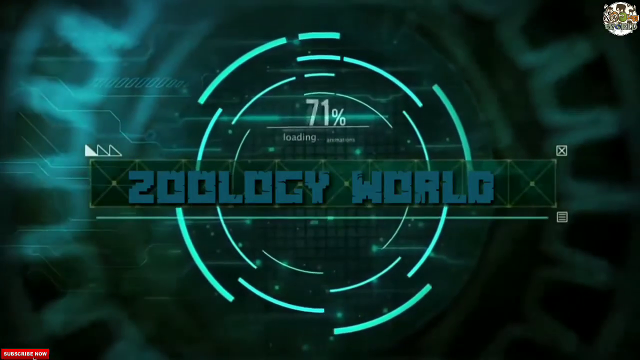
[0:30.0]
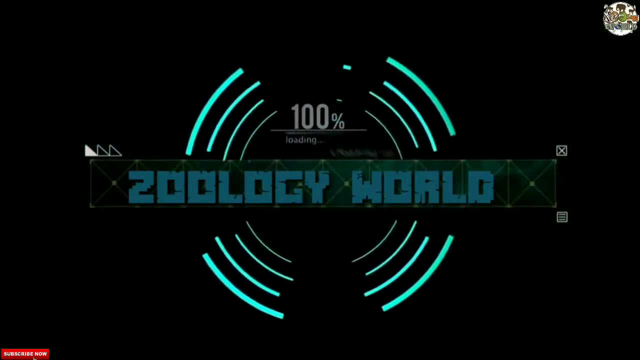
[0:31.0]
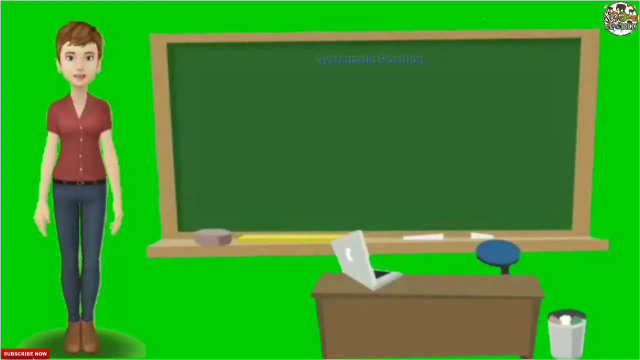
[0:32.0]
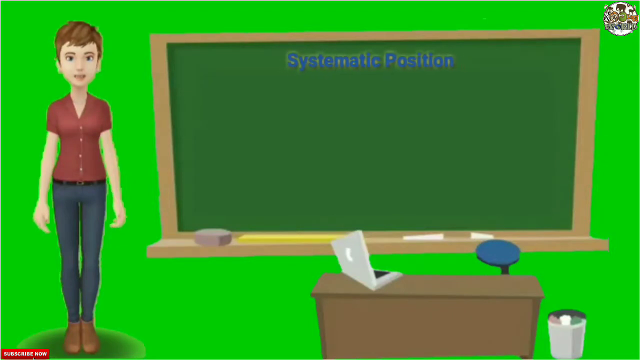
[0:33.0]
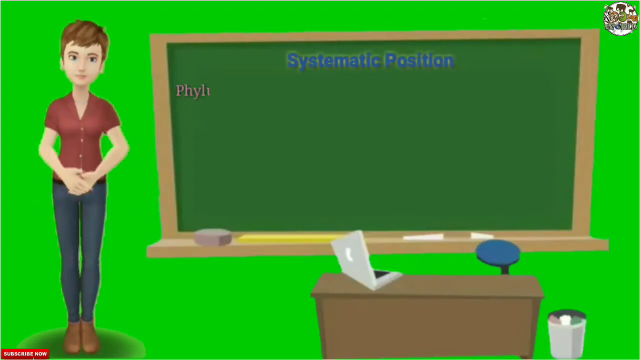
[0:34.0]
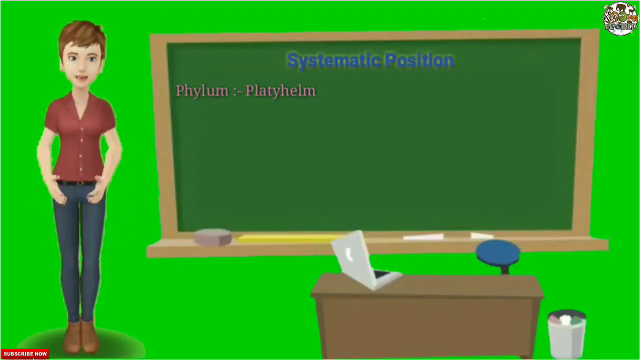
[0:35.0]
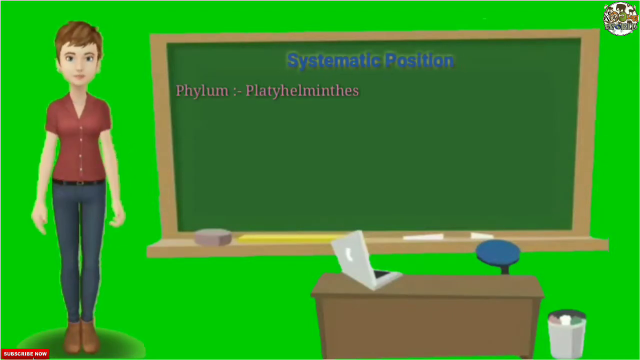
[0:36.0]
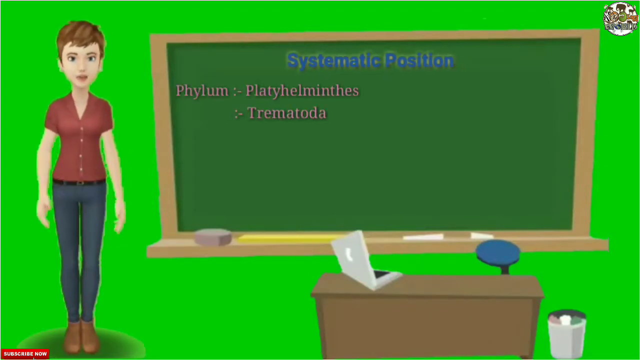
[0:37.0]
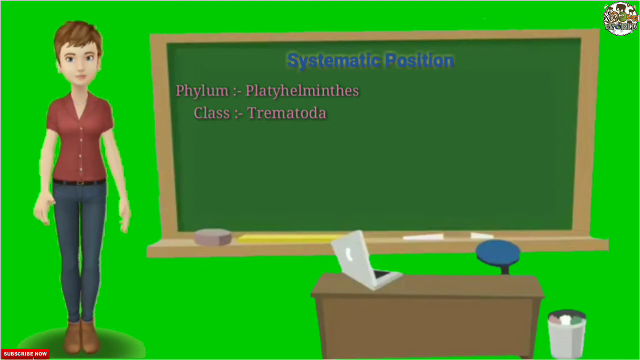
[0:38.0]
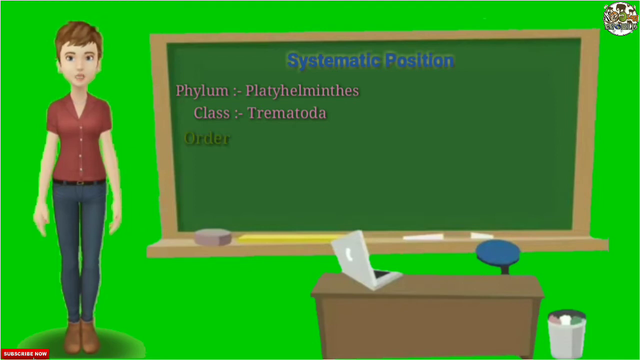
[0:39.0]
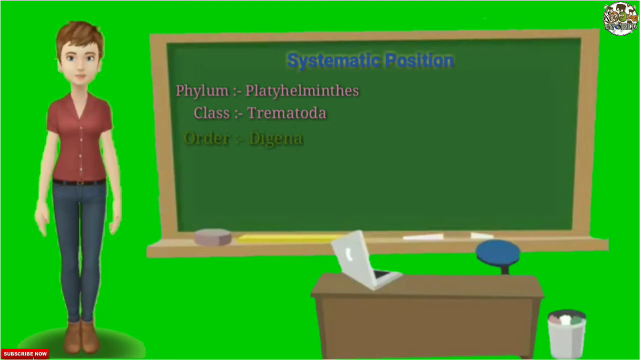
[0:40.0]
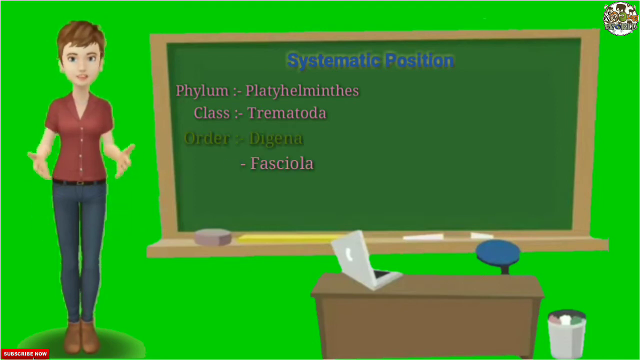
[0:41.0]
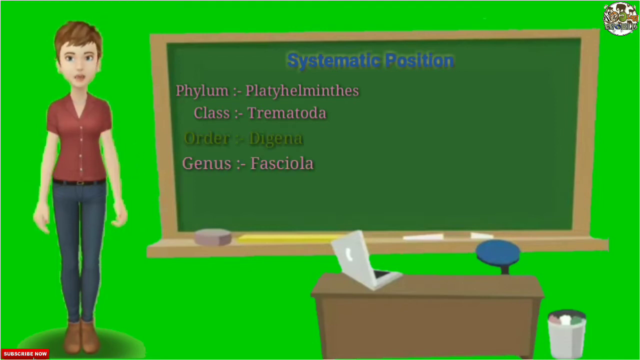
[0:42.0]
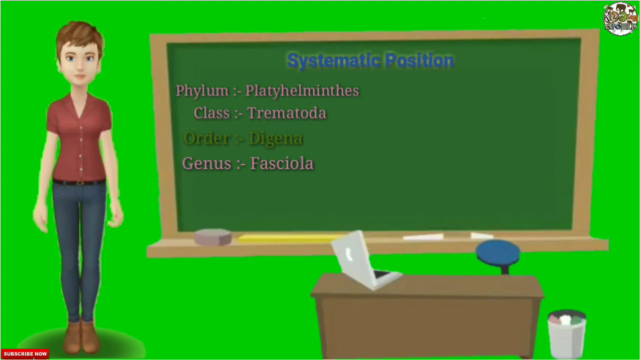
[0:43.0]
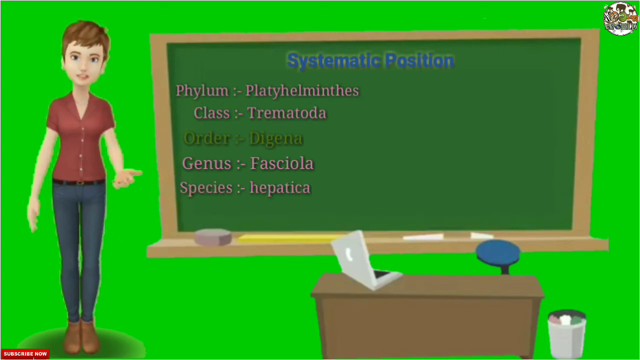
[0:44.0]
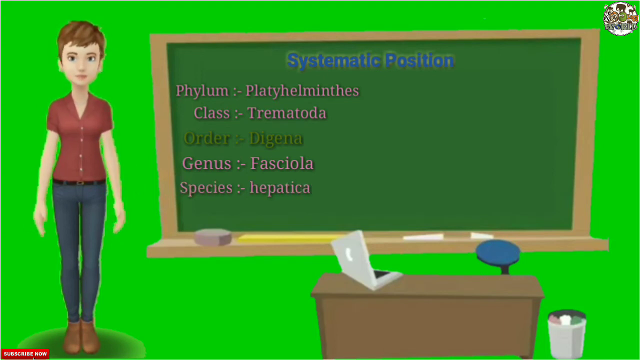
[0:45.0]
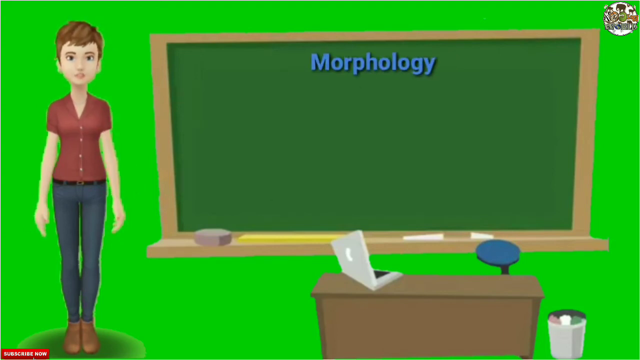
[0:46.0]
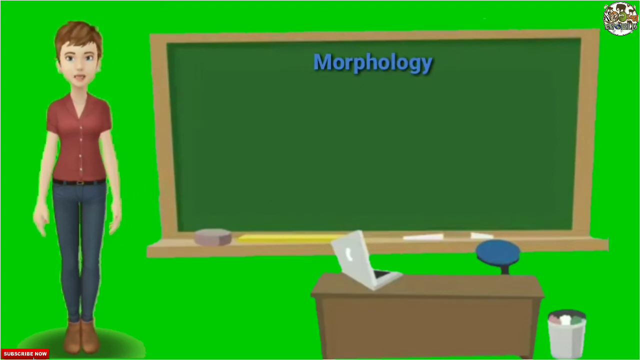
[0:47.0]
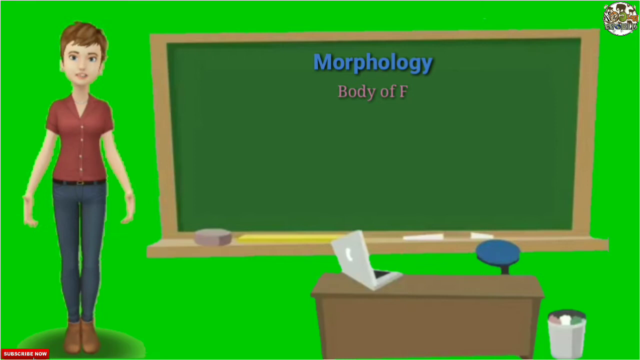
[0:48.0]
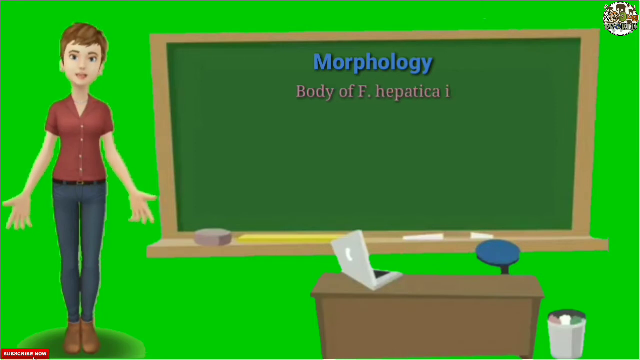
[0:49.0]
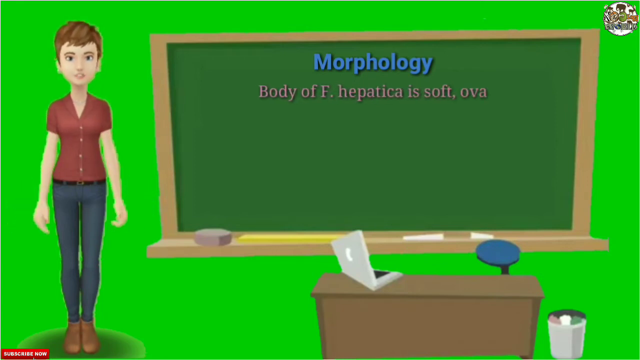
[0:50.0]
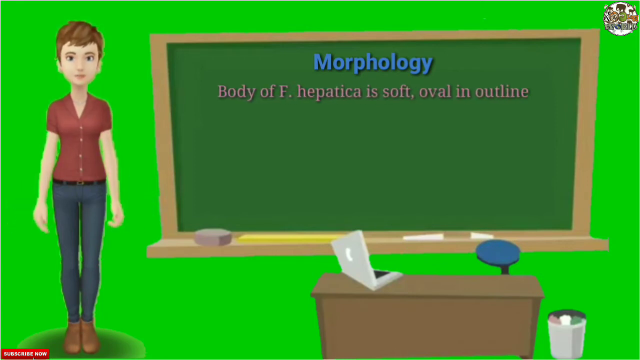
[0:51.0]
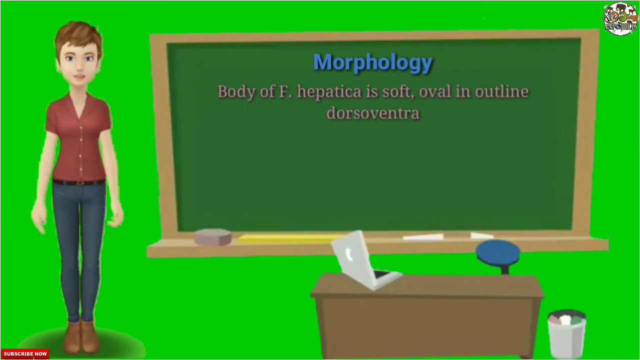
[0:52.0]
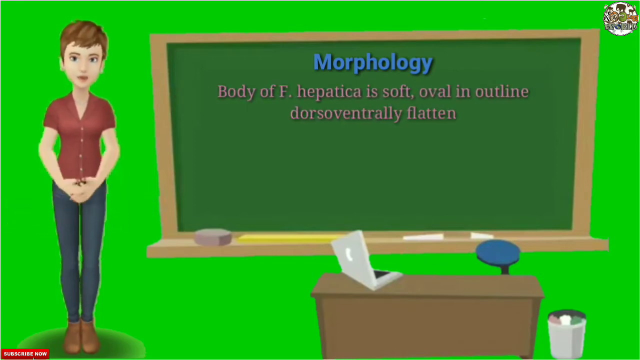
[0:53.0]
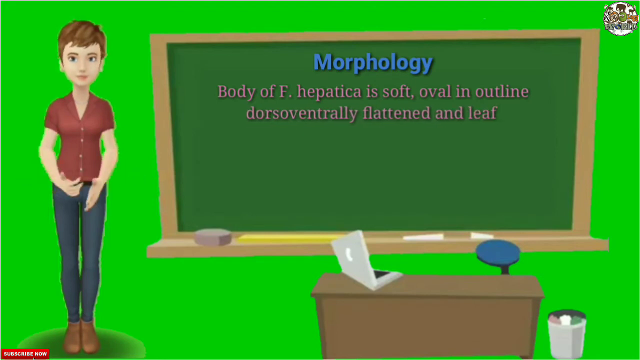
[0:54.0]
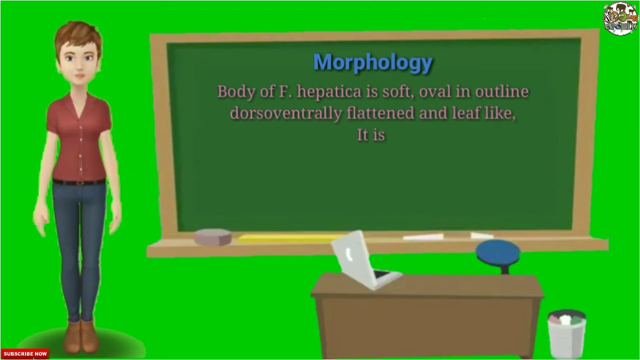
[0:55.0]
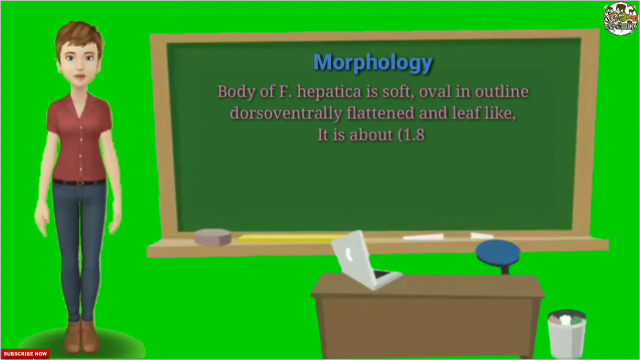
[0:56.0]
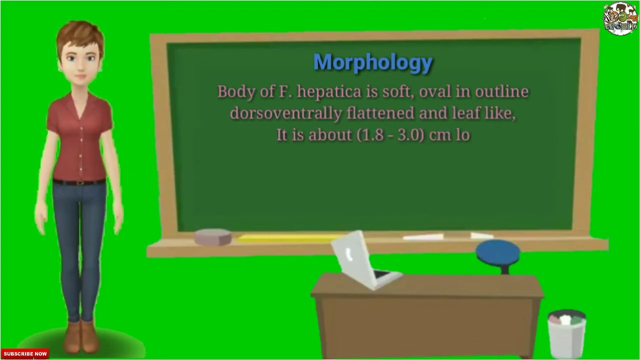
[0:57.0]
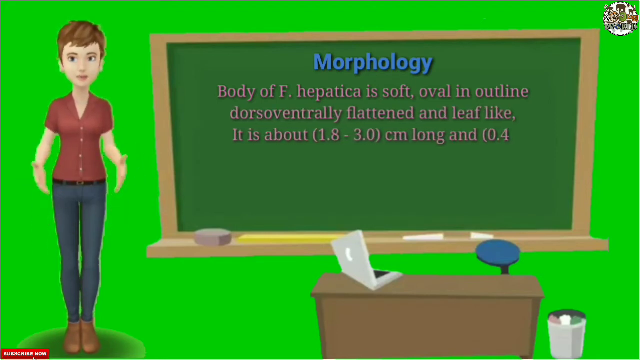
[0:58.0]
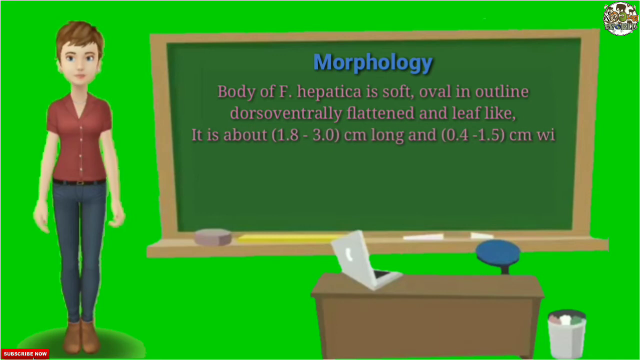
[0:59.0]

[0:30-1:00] The opening credits buzz out almost as if the cybernetic system is glitching, and Zoology World glitches out of the scene. A green background appears with a school blackboard, and an animated woman teacher standing on the left side of the screen presents words as they appear on the blackboard. "Systematic position" is in the middle of the blackboard, with "phylum Platylmentis" below it, followed by "class Trematoda", "order Digena", "genus Fasciola" and "species Hepatica". The points appear one after another, almost like a bullet-point slideshow. The blackboard is then cleared and a new heading, "morphology", appears. Text appears, then a space is left and more text begins to appear in blue below it.